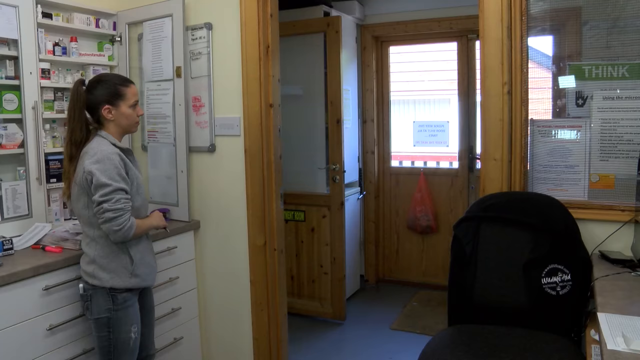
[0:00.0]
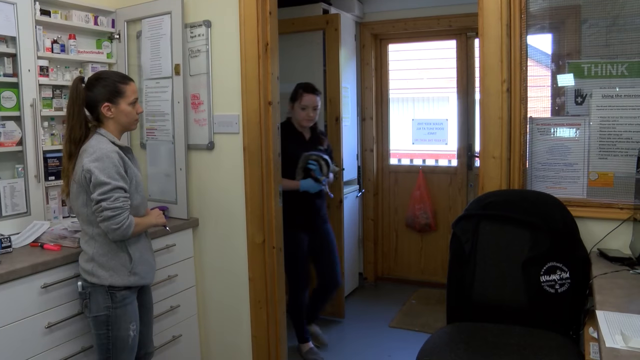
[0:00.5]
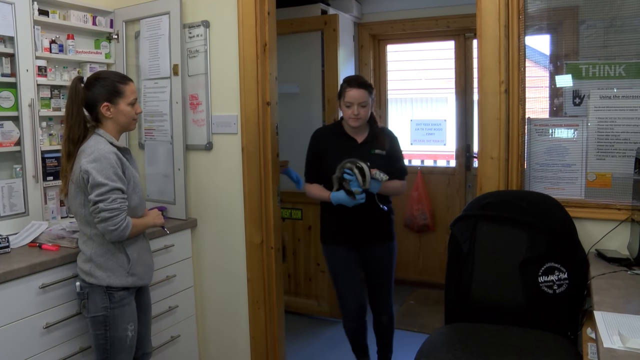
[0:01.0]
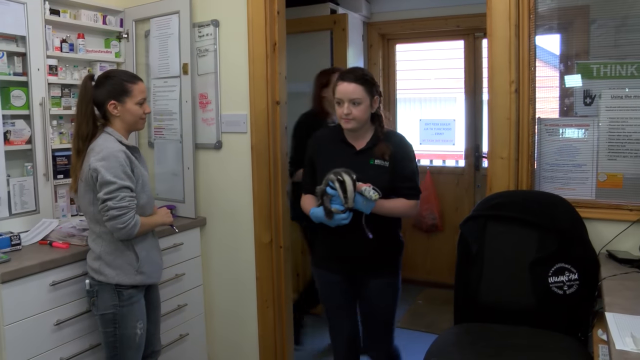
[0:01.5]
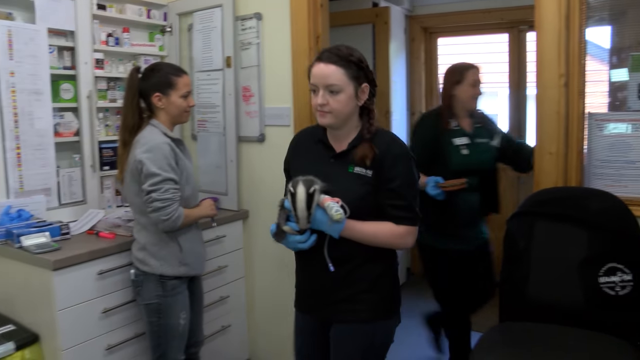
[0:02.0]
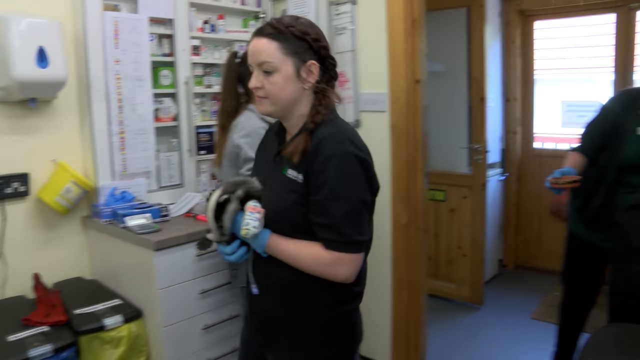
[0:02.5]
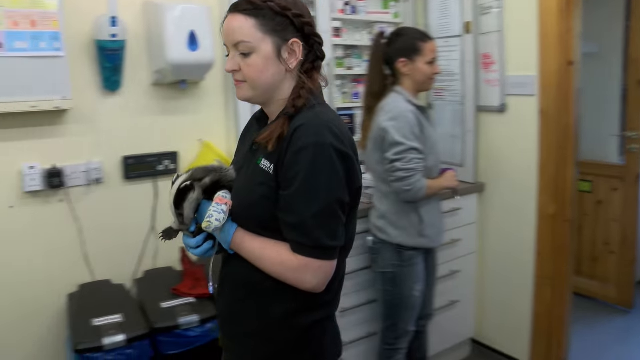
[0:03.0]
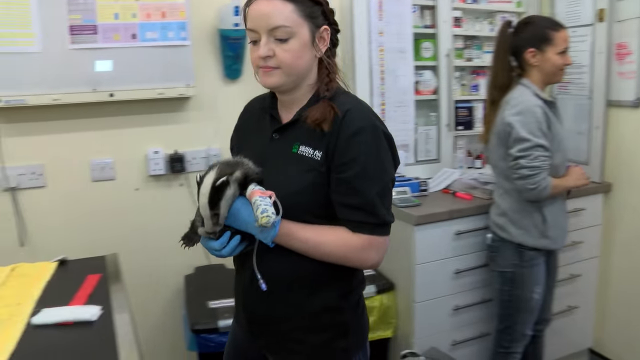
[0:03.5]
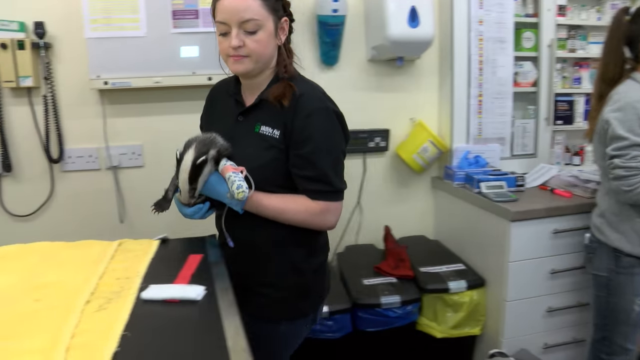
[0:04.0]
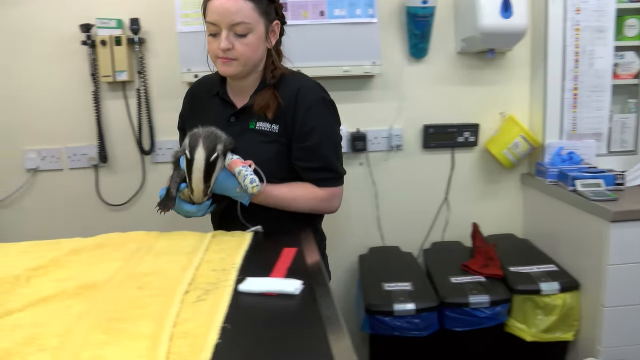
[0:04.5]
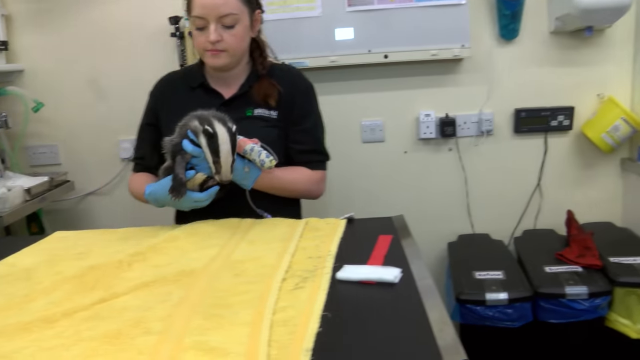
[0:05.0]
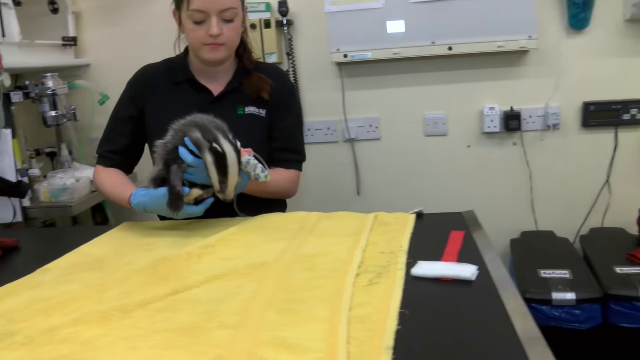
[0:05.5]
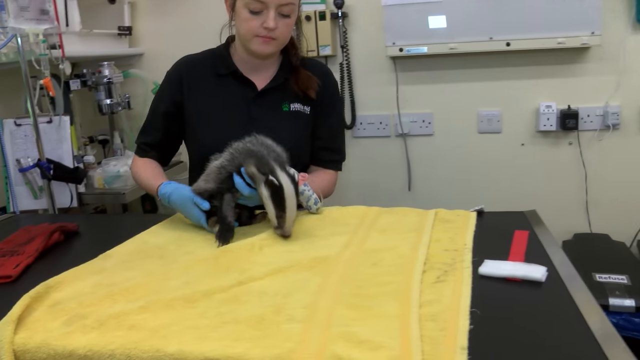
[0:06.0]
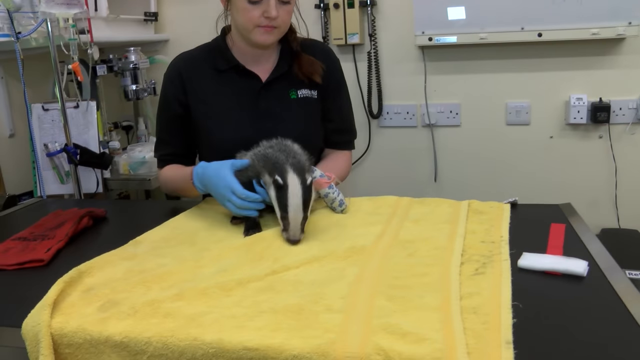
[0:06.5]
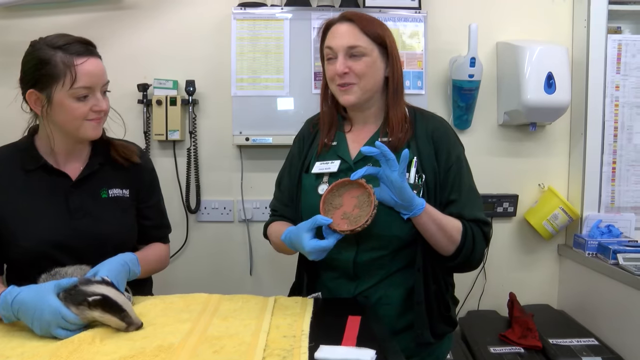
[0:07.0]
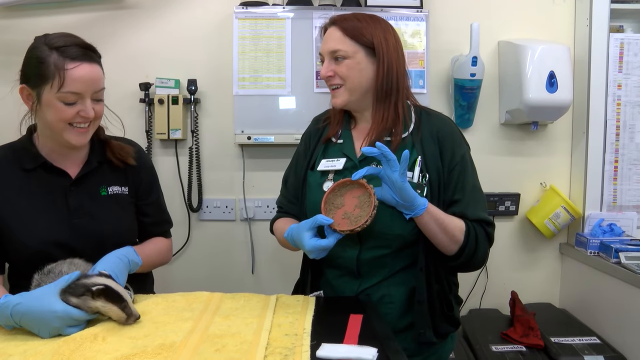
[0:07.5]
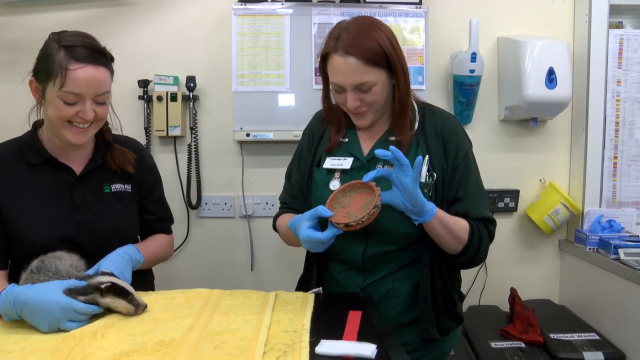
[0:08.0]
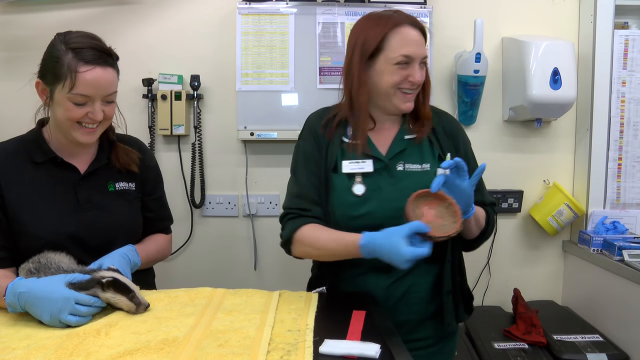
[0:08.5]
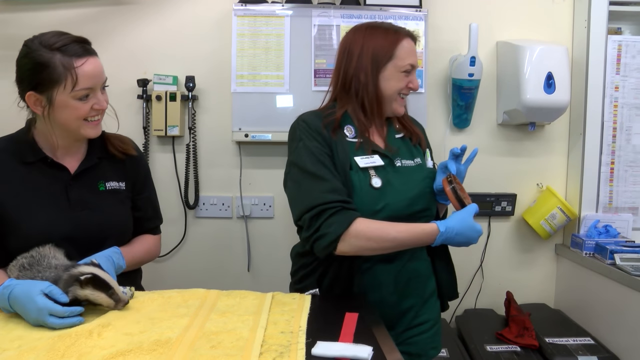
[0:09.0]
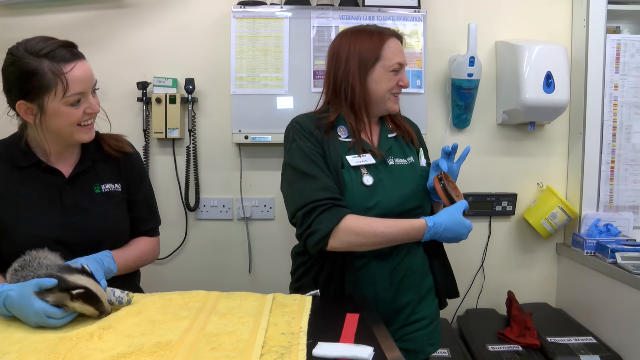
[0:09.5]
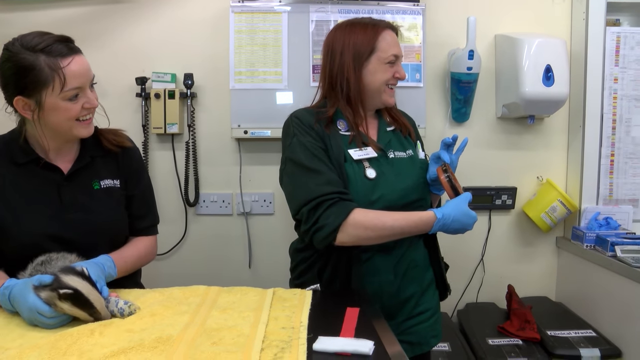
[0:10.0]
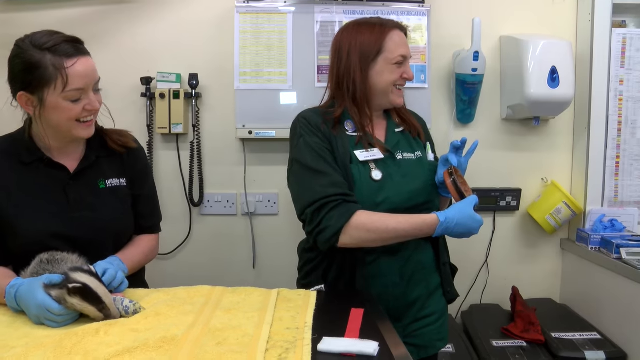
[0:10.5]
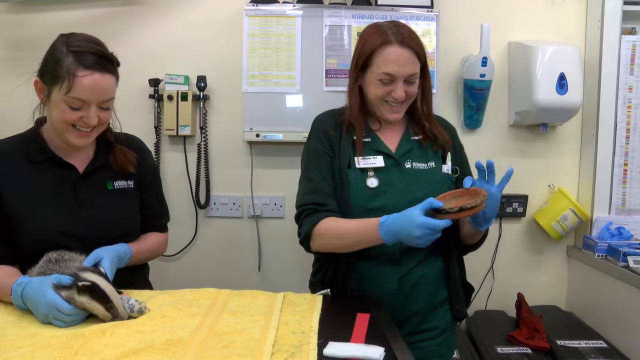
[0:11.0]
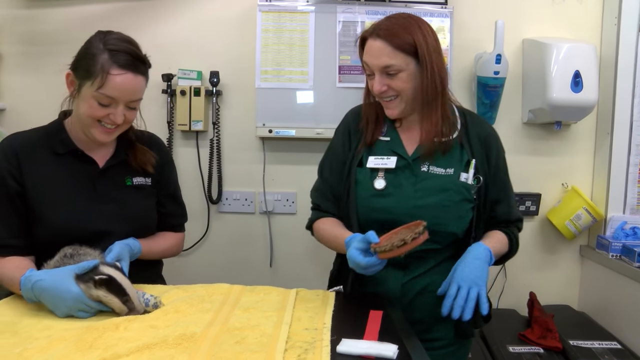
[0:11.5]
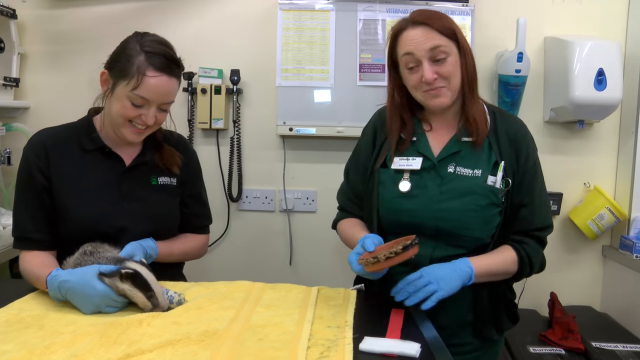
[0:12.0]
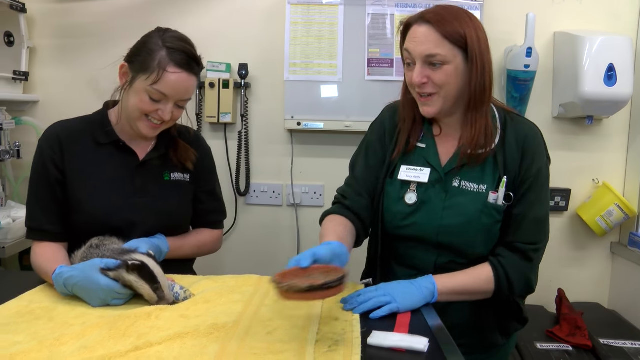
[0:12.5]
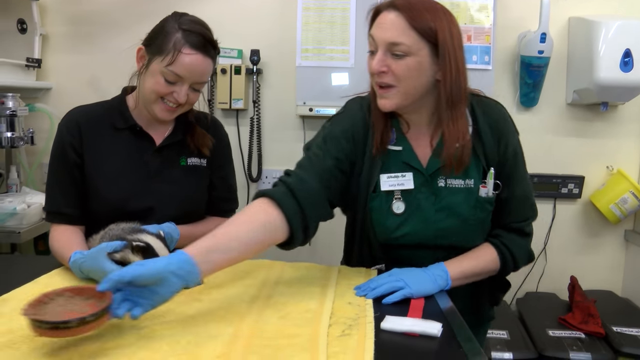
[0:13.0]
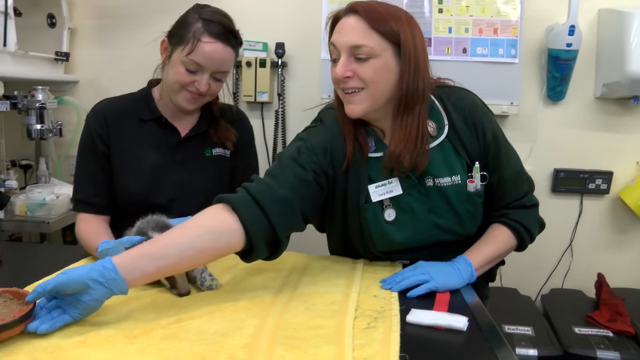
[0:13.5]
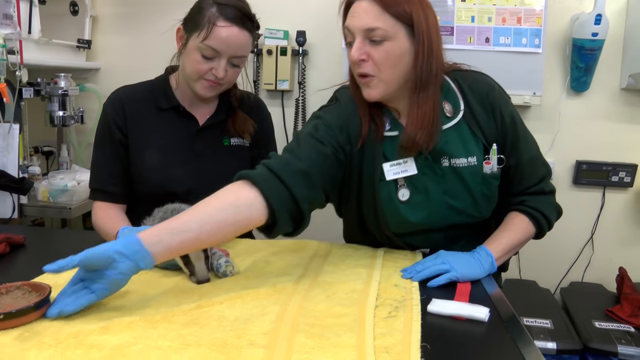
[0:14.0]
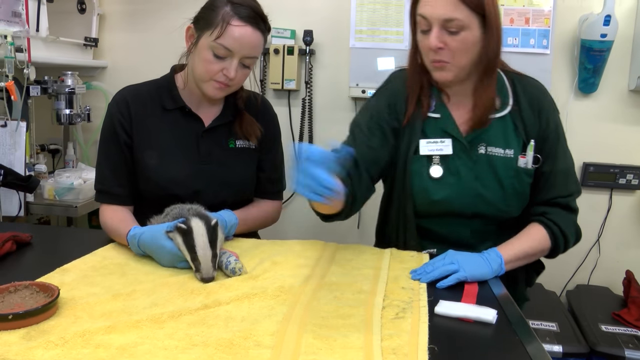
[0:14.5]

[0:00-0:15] A room that looks like a lab has one person standing in it, and then people start to come to the door. Two women come through the door carrying an animal that looks like it may be a badger; they look like they may be veterinarians. She puts the badger on the table, and two people are now at the table. The one who carried the badger wears a black shirt and blue plastic gloves, and the second wears a green sweater and blue plastic gloves. There is a yellow towel on the table, and the badger is on the towel.